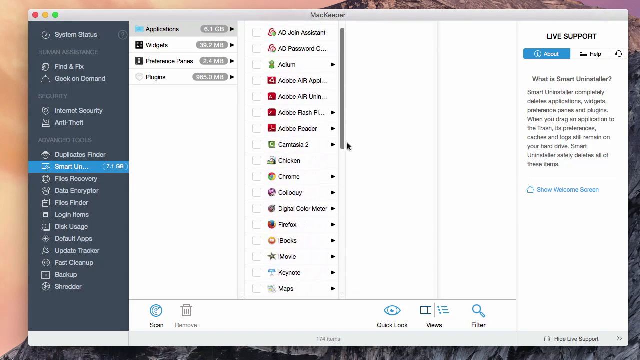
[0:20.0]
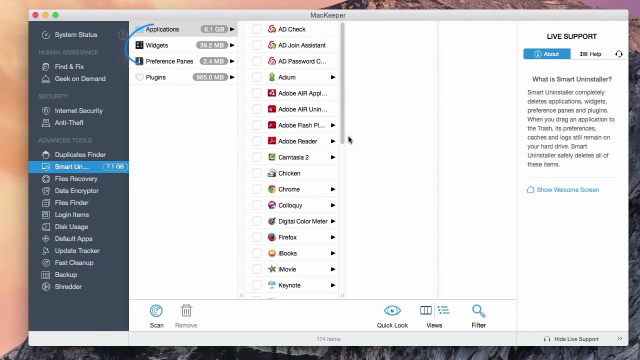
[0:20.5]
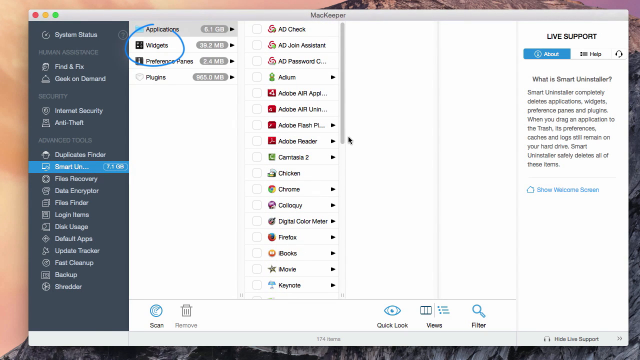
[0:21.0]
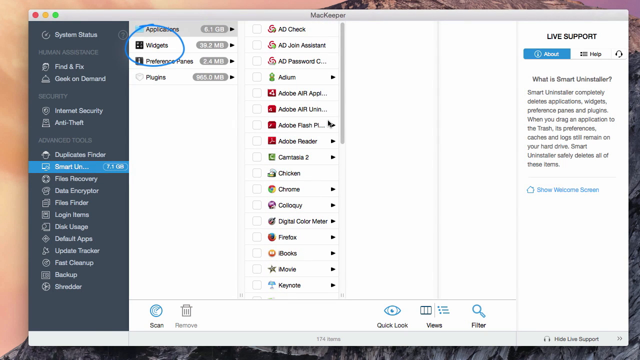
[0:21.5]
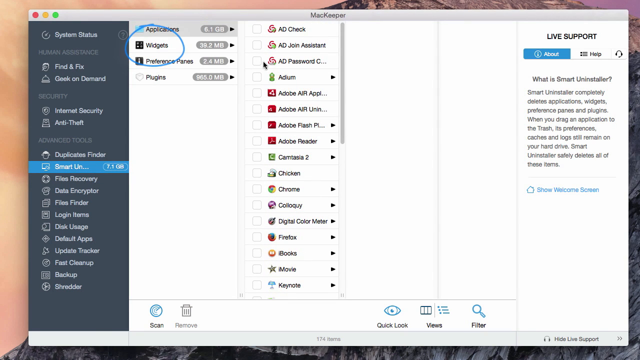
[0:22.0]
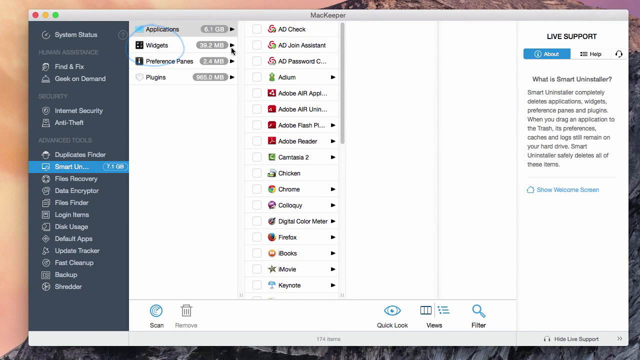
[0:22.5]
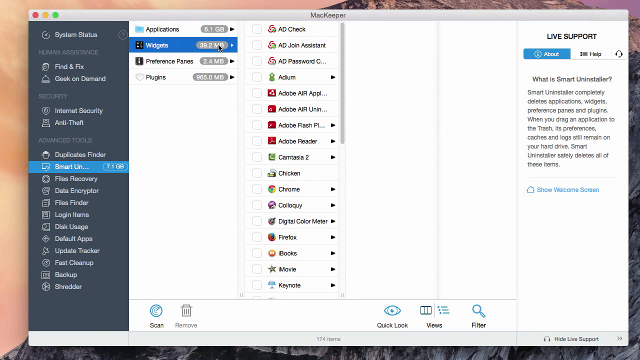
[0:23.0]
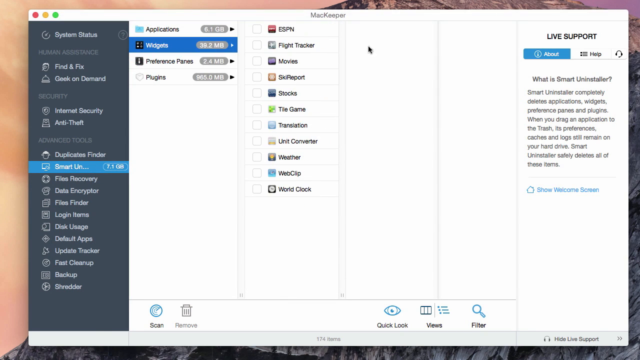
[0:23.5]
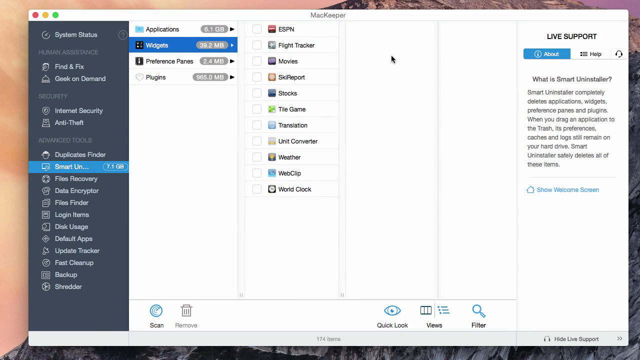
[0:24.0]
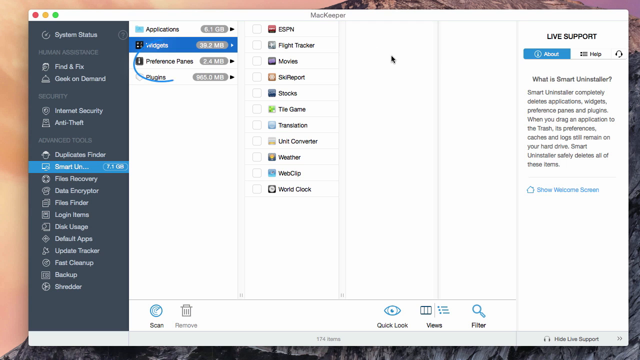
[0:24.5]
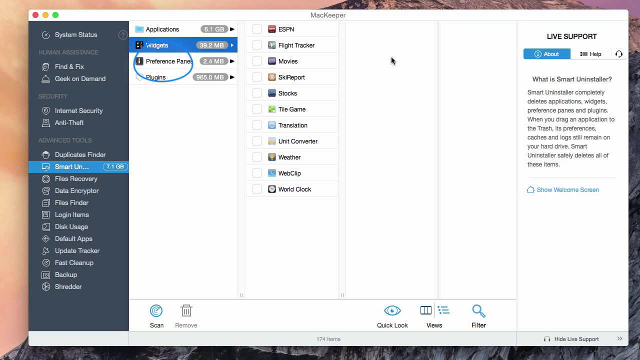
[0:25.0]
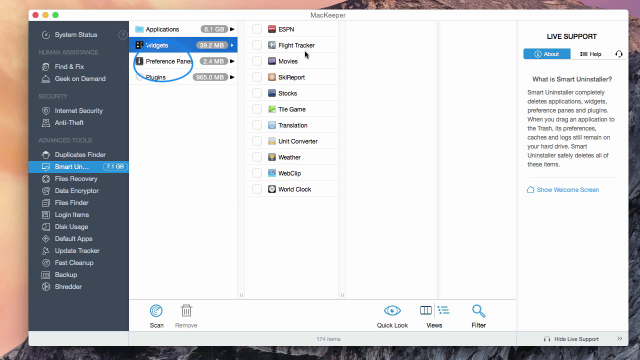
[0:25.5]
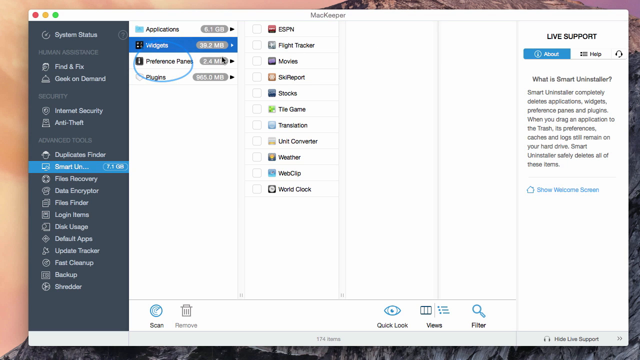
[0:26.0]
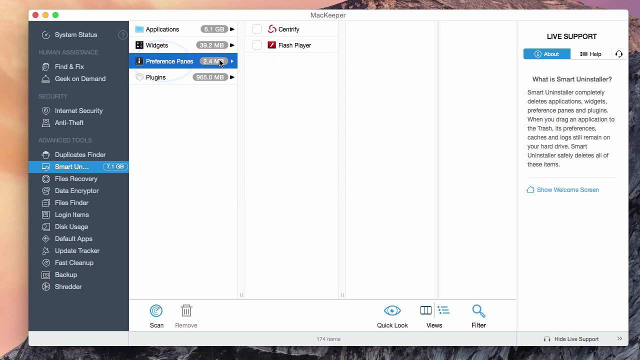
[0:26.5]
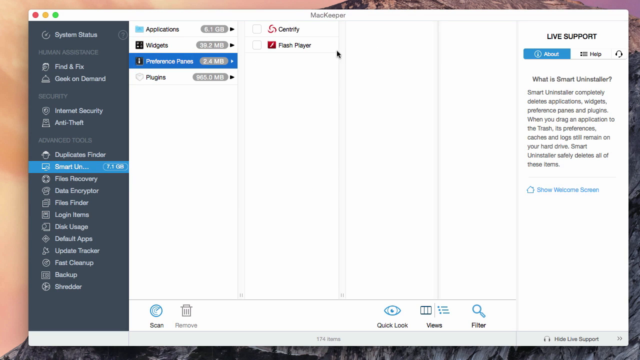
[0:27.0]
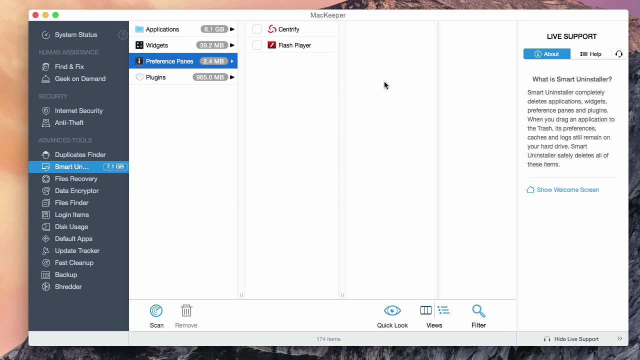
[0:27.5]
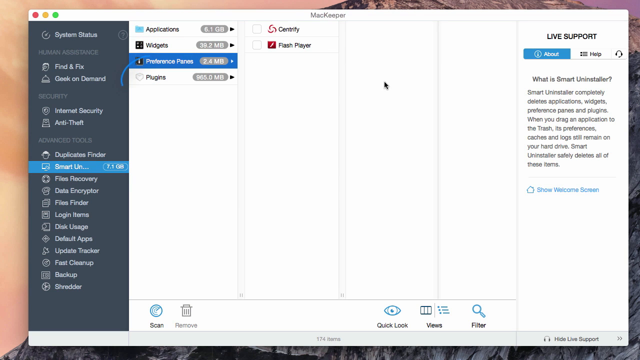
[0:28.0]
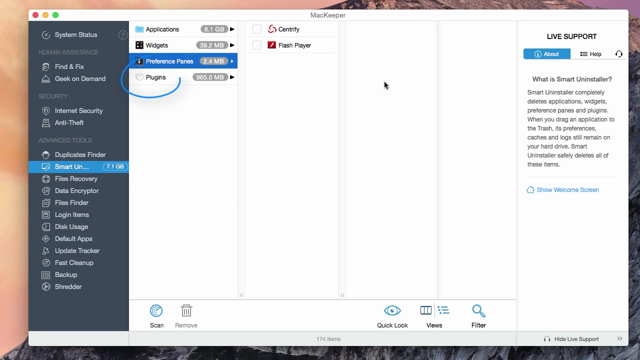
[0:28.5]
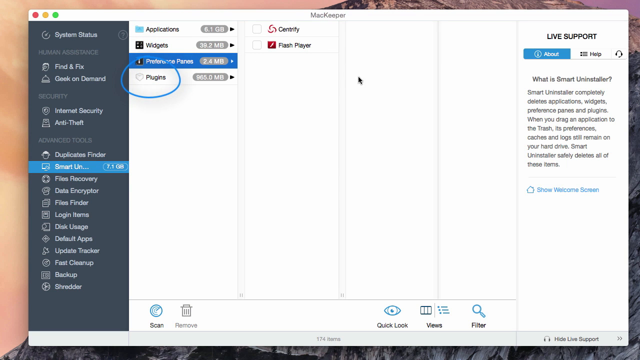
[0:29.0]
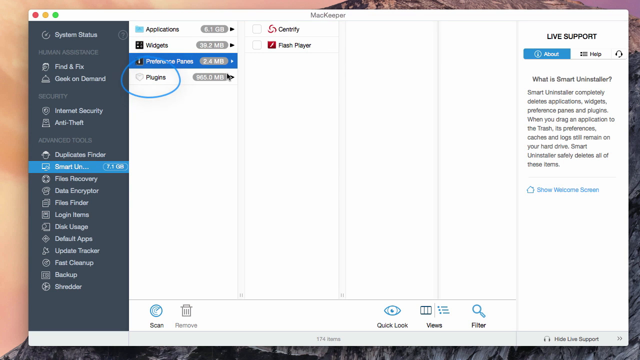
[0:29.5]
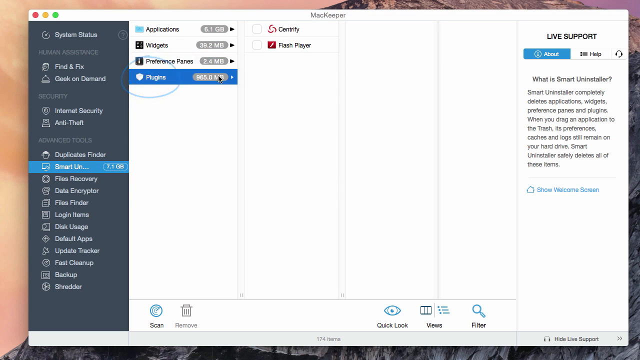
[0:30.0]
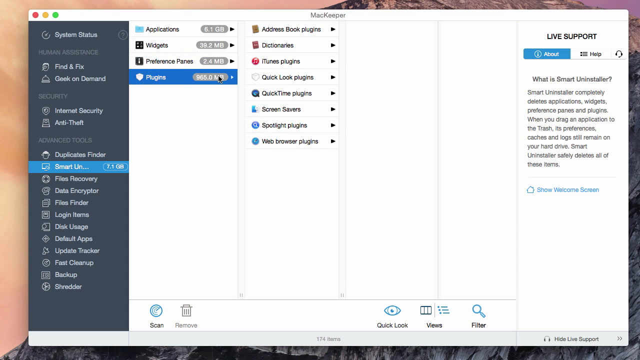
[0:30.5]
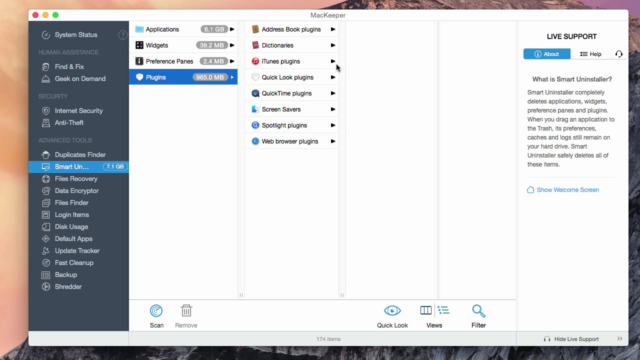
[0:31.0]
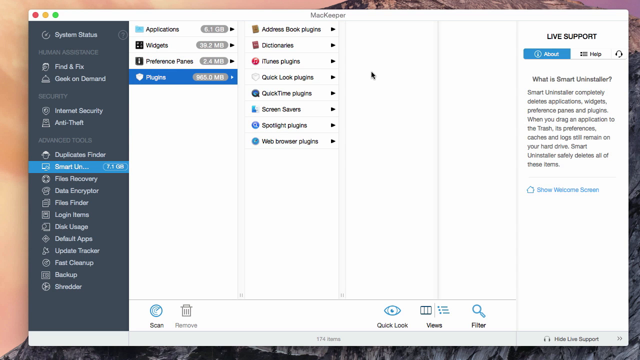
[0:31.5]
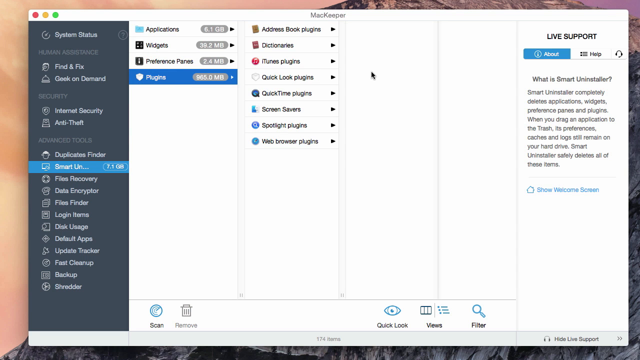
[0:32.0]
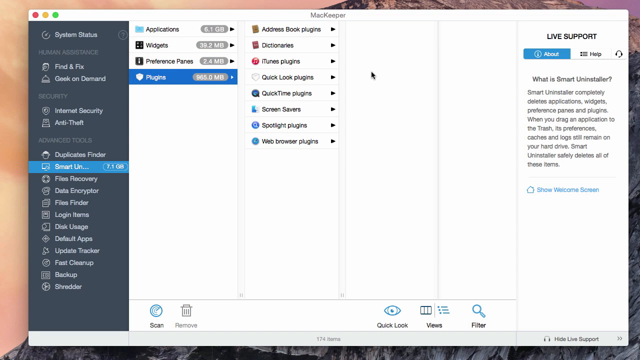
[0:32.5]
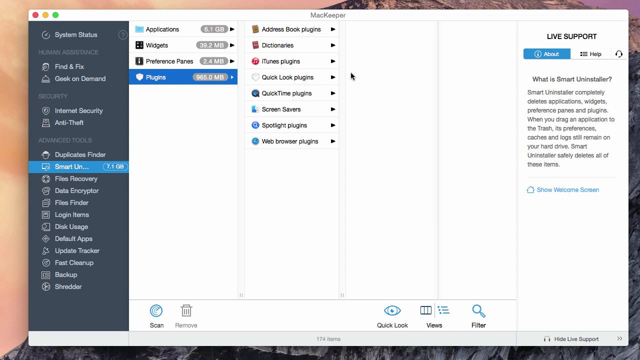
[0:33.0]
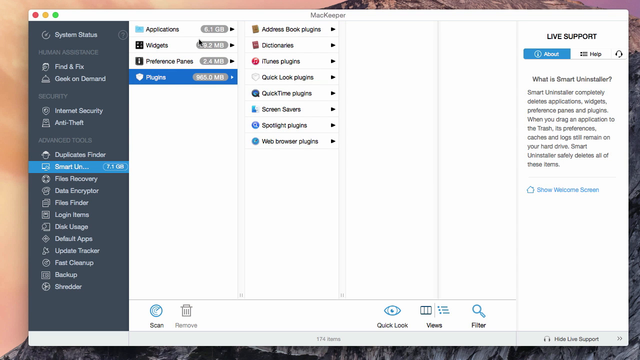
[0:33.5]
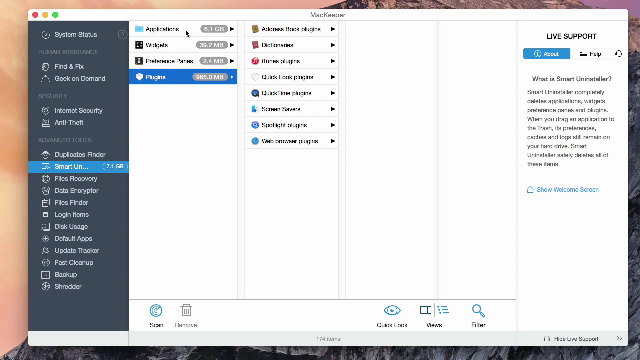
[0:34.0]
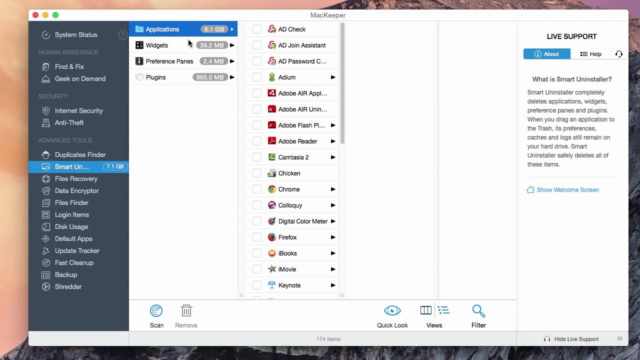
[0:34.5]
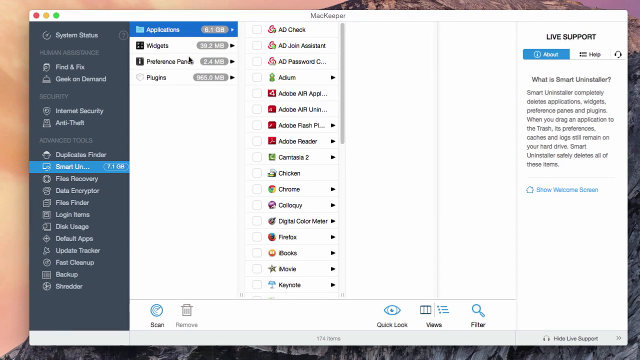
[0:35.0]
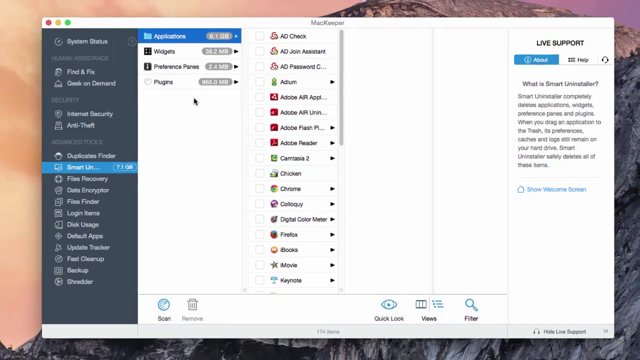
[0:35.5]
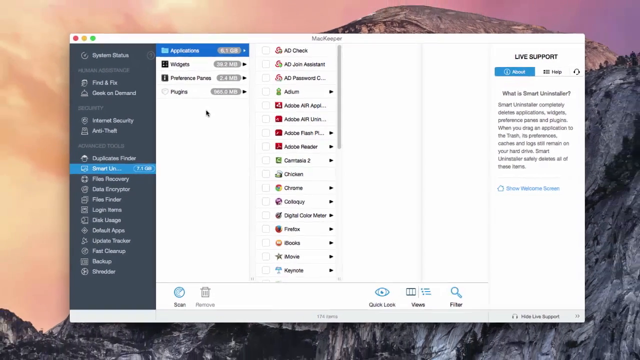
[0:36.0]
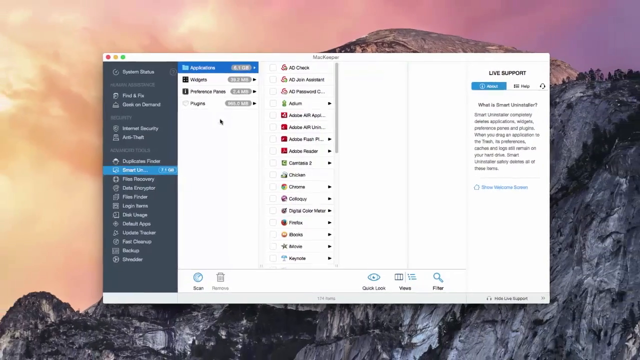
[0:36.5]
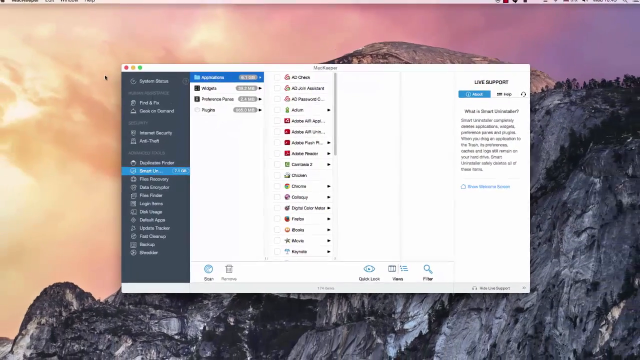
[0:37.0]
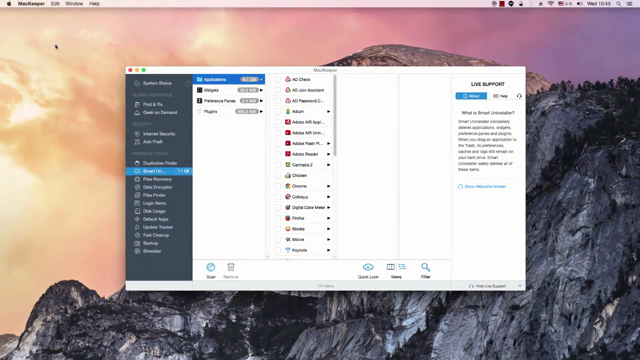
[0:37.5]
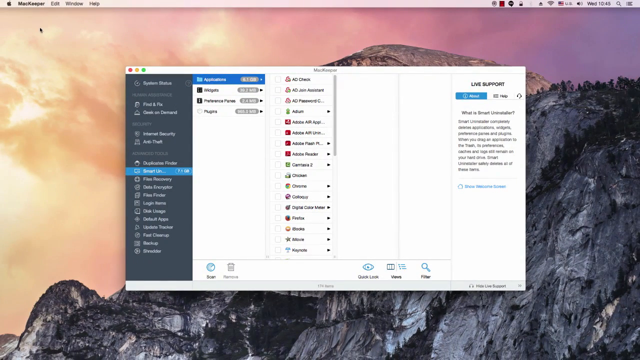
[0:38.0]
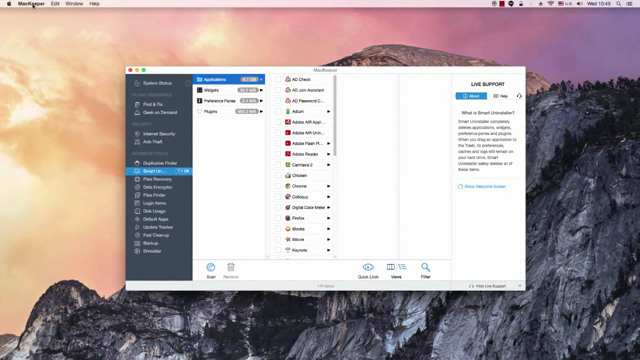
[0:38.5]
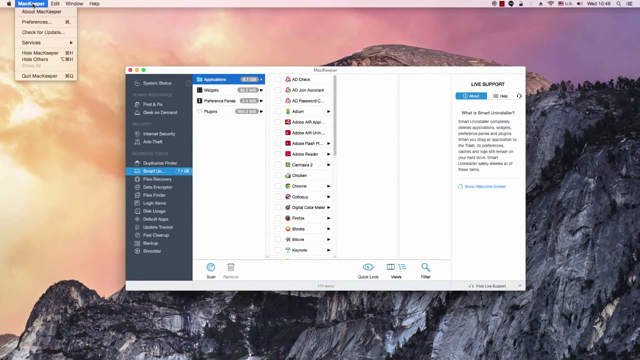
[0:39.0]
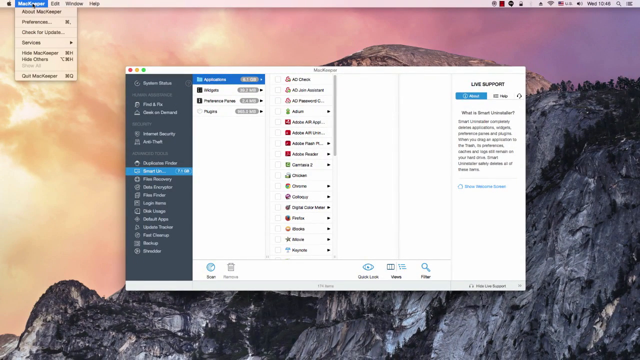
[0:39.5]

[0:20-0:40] The scan results remain on screen, with the mouse around the middle of the screen. At the top left, under the Applications tab, there is a Widgets section, and a blue circle is drawn around it. The mouse moves up to Widgets and clicks, switching the section from applications to widgets, and the widgets appear on screen. The mouse moves to the right of them, and a blue circle appears over Preference Panes, just below Widgets. The mouse moves to Preference Panes and clicks, and the preference panes appear. After the mouse moves to the right, a blue circle is drawn around Plugins; the mouse goes over to Plugins and clicks, and the plugins appear. The user then moves the mouse back up to the Applications section and clicks it, opening that list instead of the plugins. The camera zooms out to show more of the desktop computer, and the user moves the mouse up to MacKeeper, clicks it and scrolls down to the Preferences tab, resting the mouse on it.